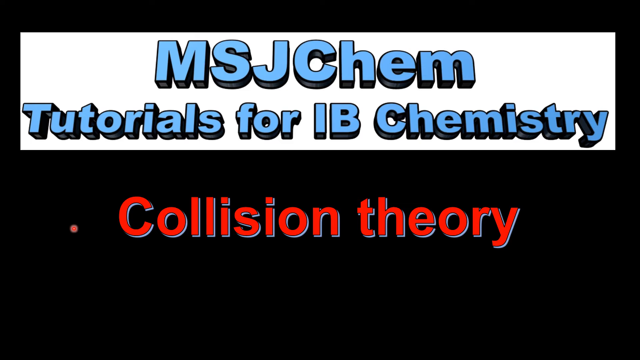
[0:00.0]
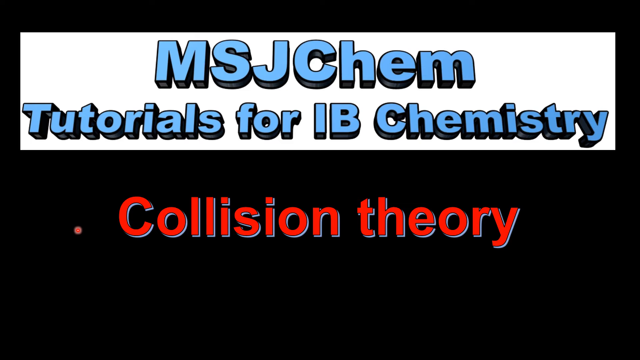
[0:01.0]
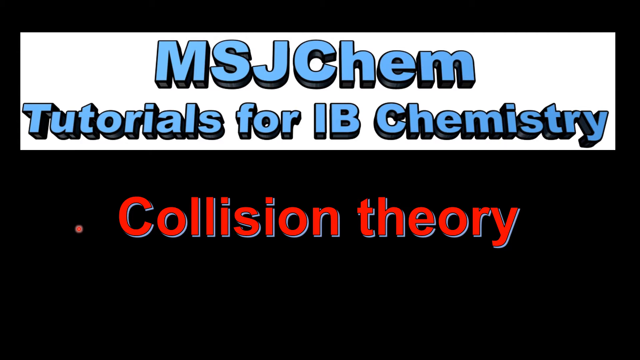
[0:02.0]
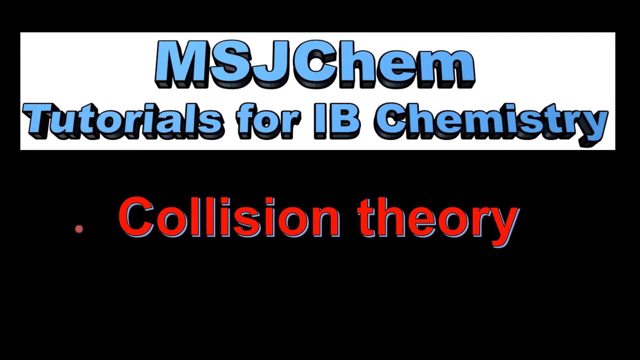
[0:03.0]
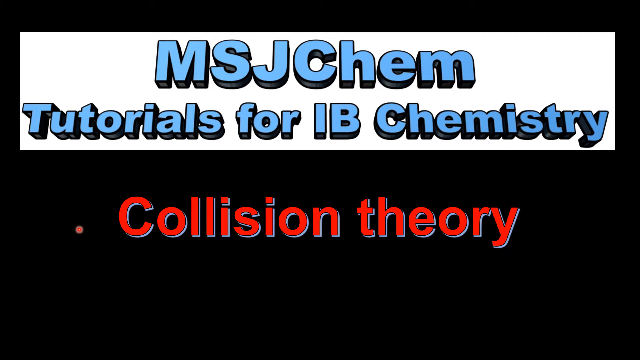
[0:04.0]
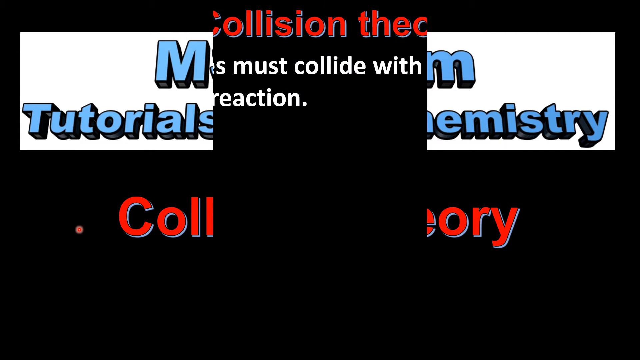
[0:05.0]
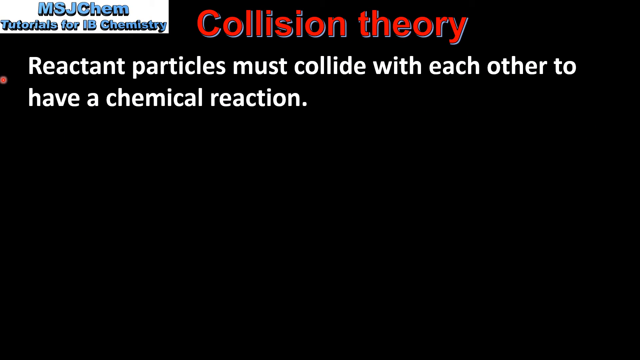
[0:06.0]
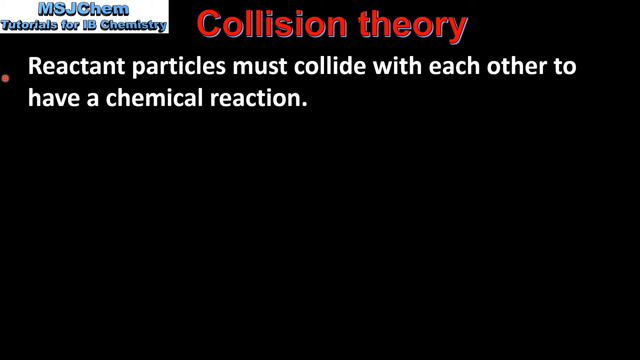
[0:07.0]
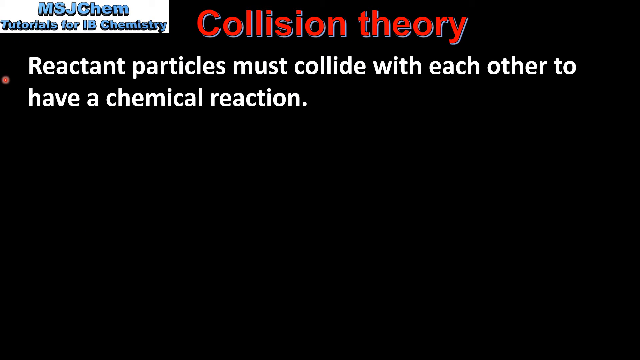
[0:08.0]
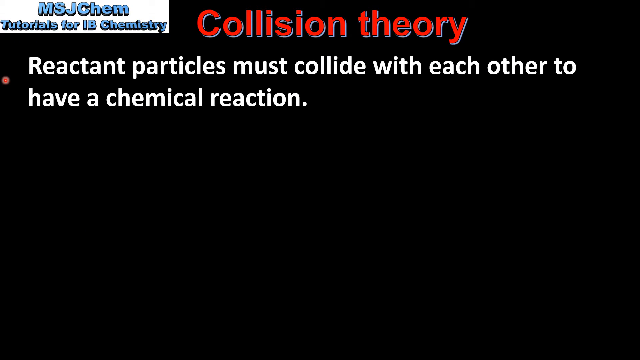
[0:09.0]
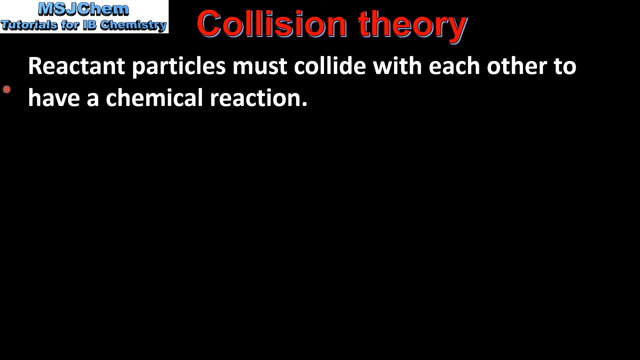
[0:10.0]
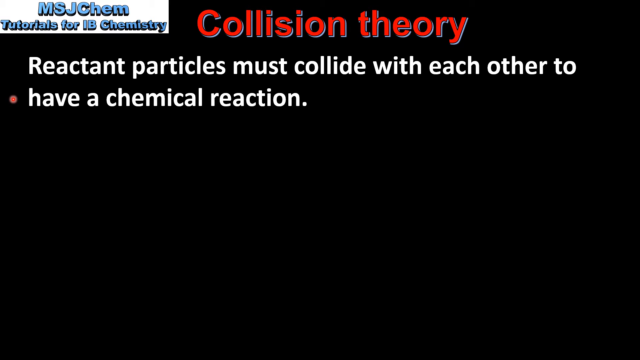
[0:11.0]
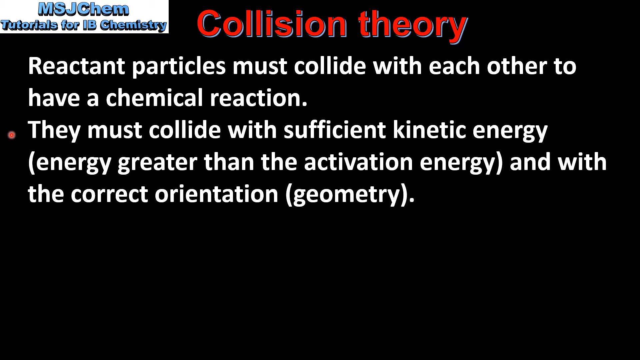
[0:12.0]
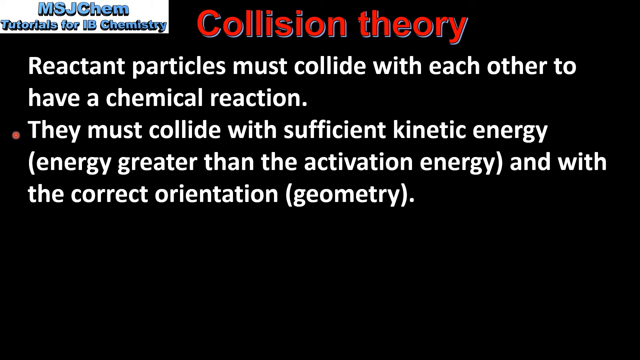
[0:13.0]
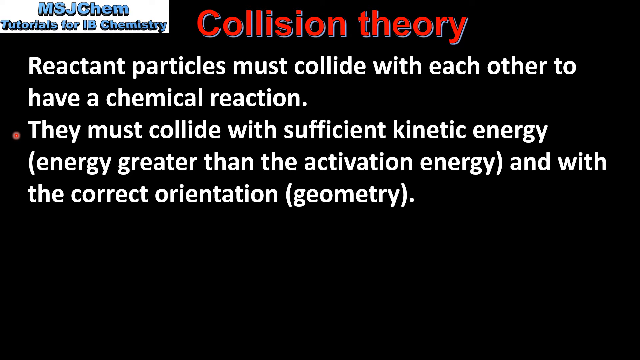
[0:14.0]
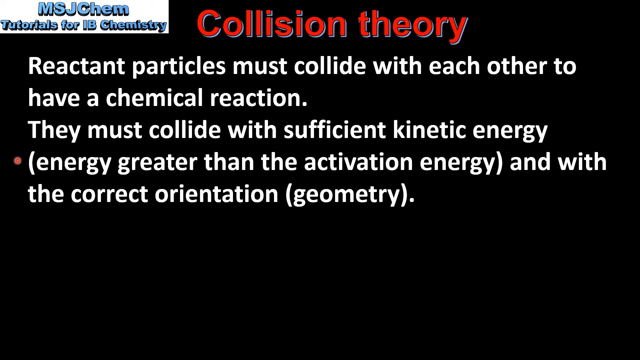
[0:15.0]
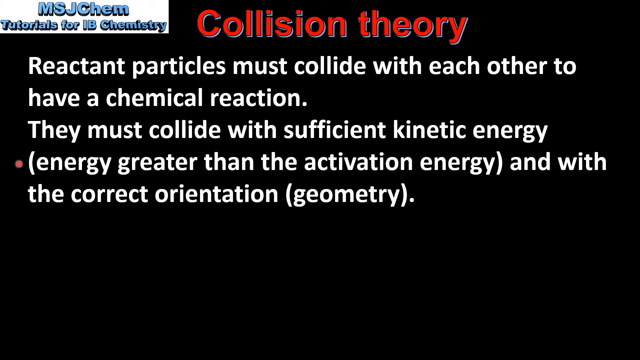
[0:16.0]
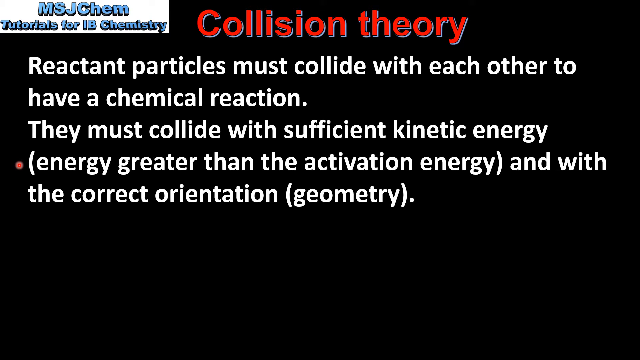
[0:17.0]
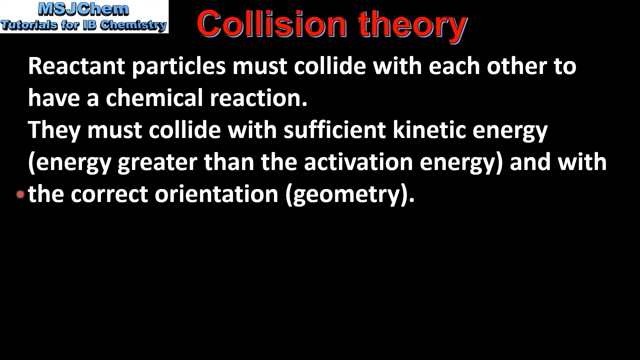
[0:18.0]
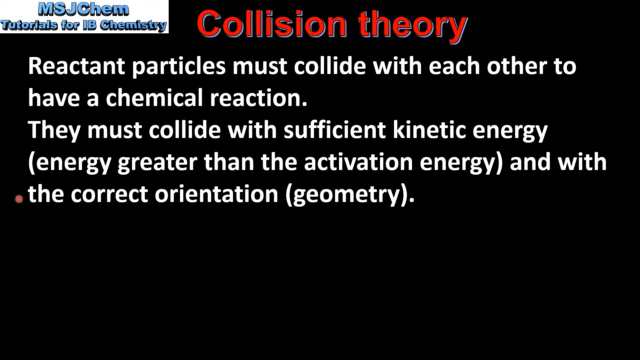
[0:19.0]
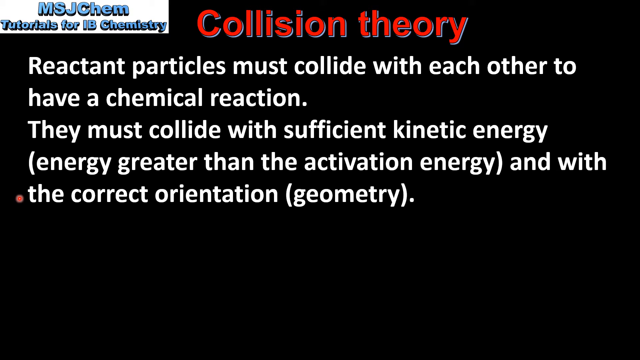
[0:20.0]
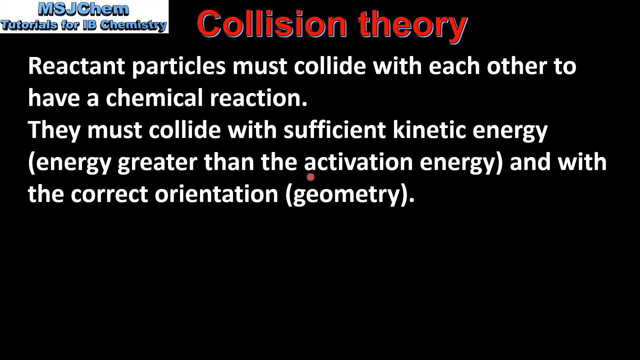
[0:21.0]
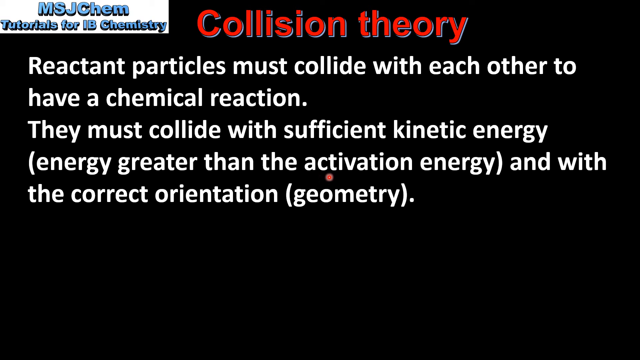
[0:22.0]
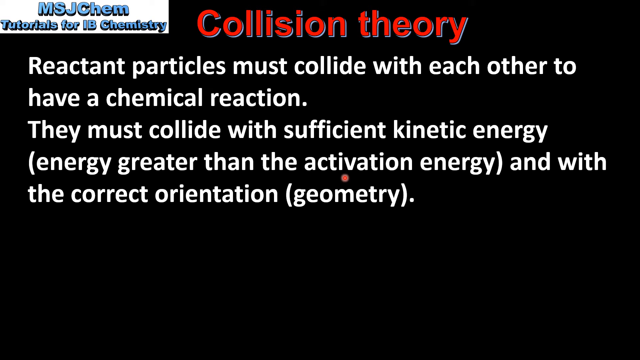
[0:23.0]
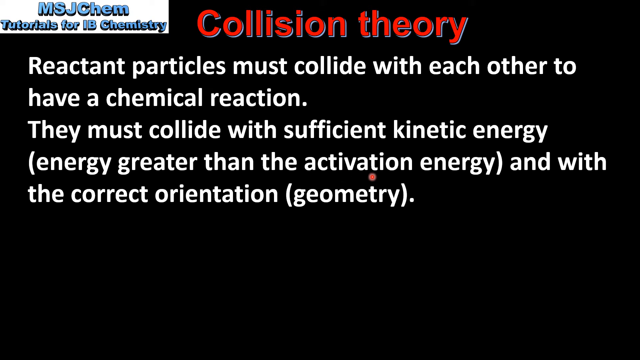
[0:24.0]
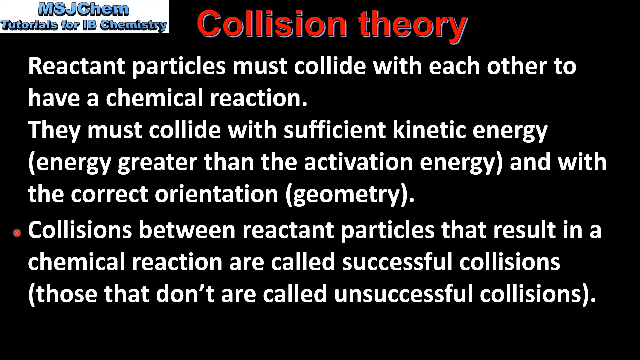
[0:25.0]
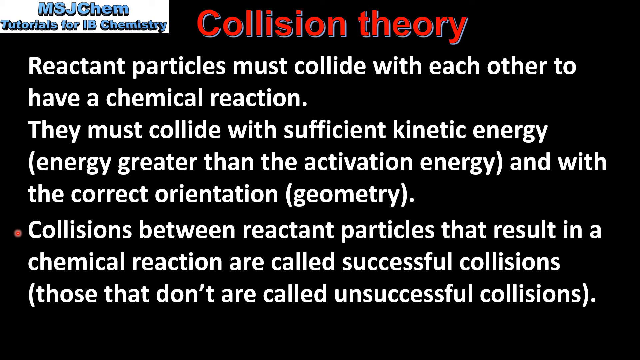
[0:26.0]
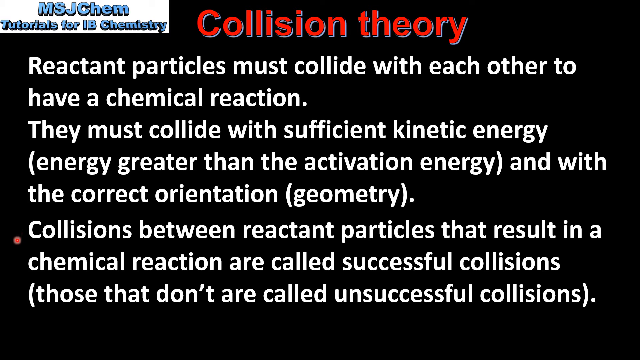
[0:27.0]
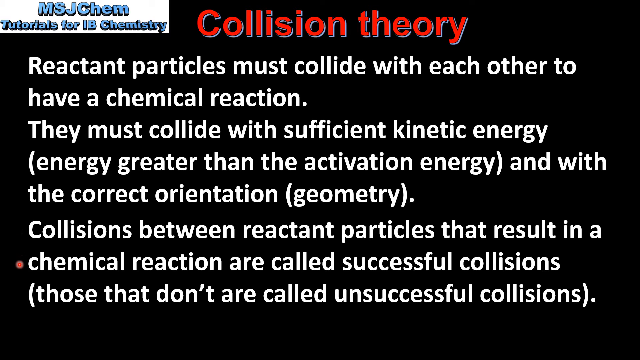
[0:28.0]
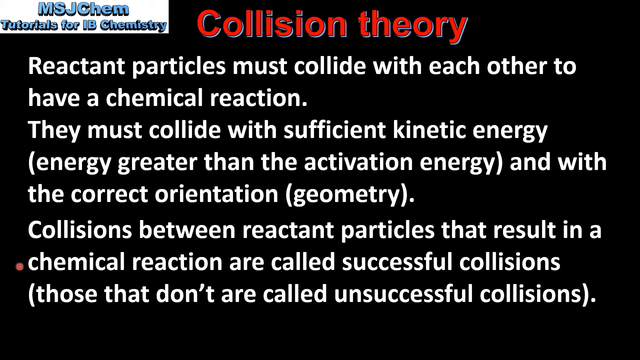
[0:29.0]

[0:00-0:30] No people or activities appear; the video consists of written words. A title reads "IB chemistry collision theory". As the video continues, more text appears stating that particles must collide with each other to have a chemical reaction, with energy "greater than activation energy" and with the correct orientation. More information keeps popping up on screen.